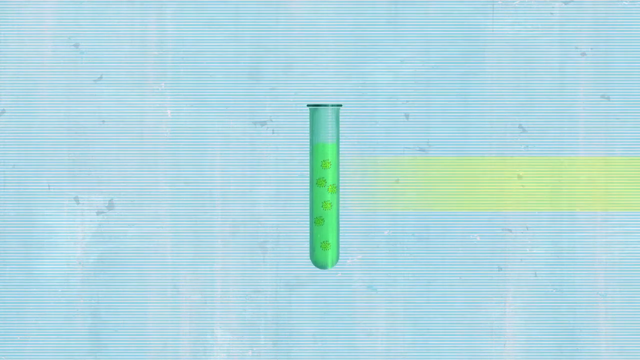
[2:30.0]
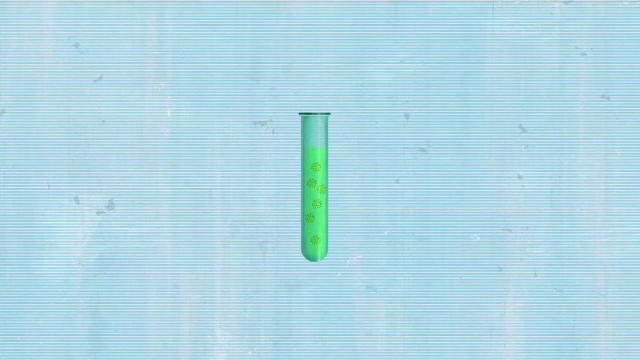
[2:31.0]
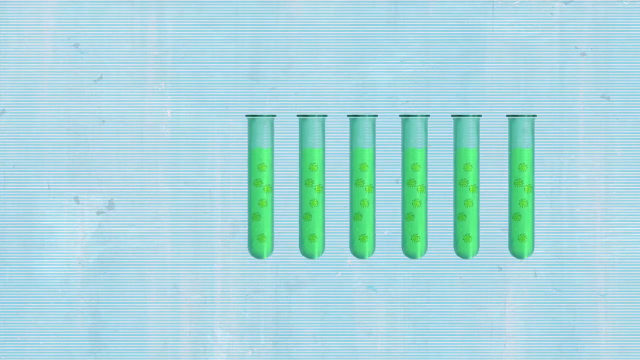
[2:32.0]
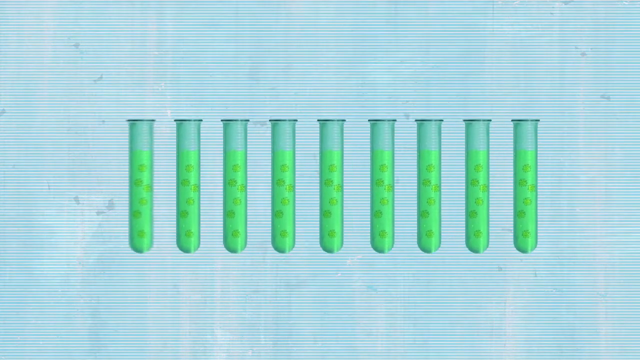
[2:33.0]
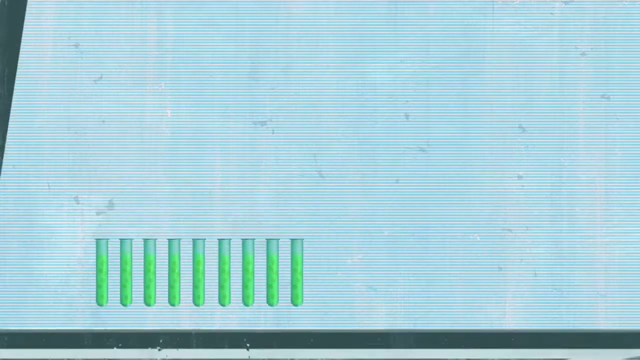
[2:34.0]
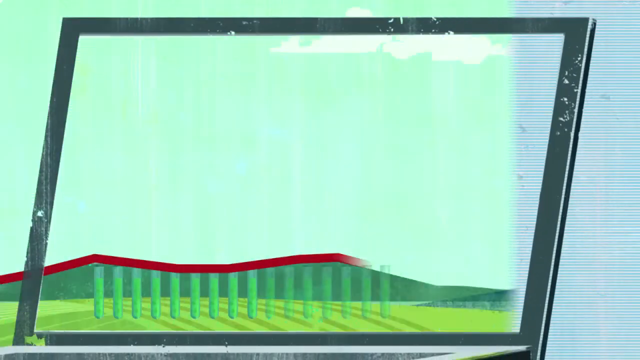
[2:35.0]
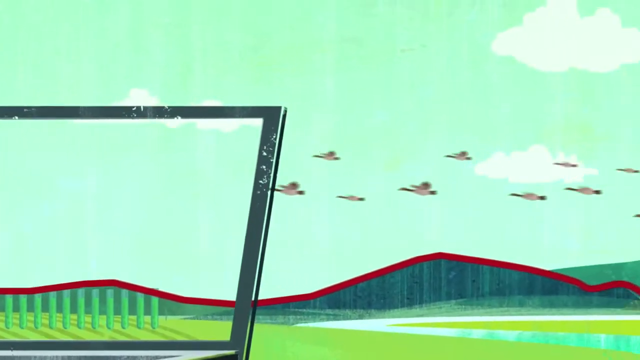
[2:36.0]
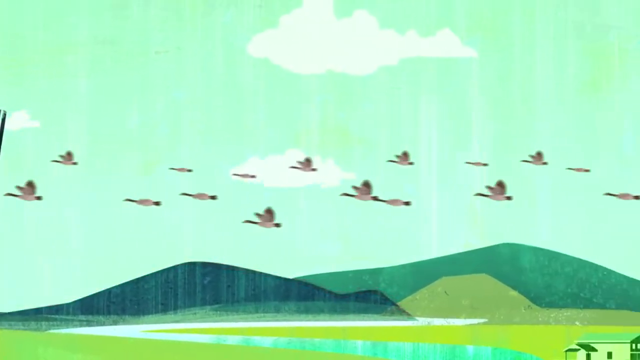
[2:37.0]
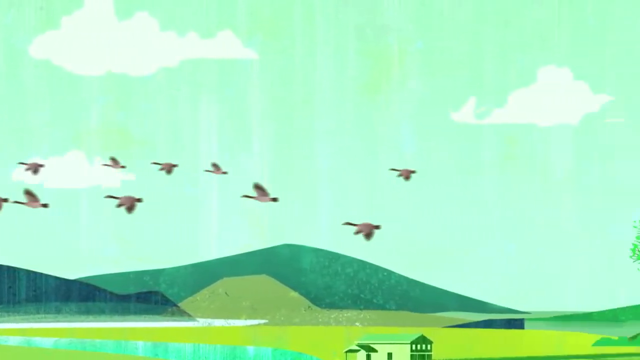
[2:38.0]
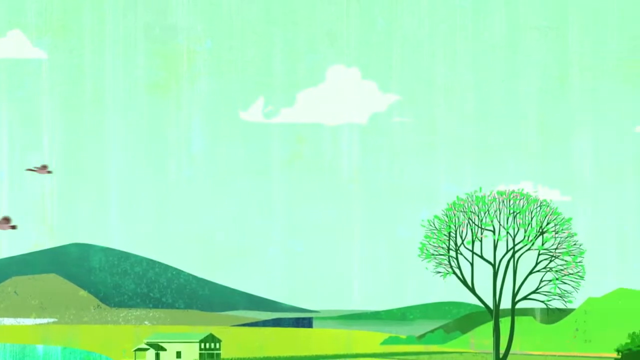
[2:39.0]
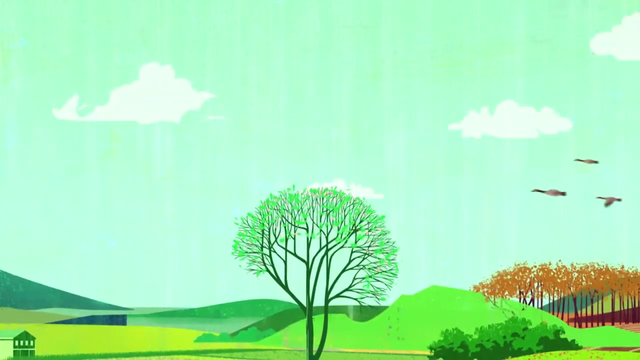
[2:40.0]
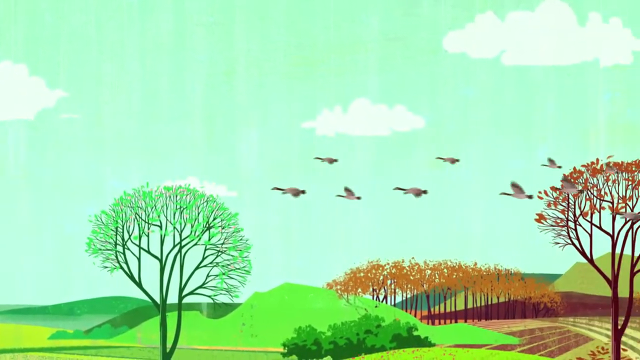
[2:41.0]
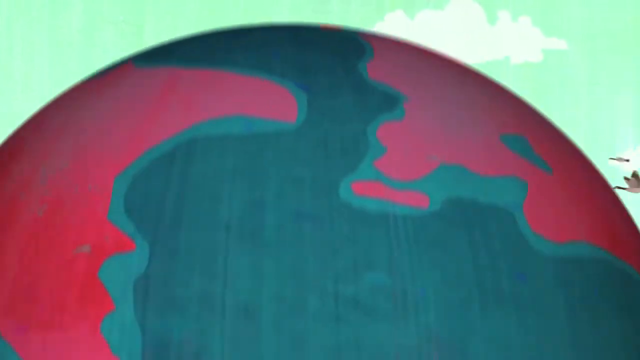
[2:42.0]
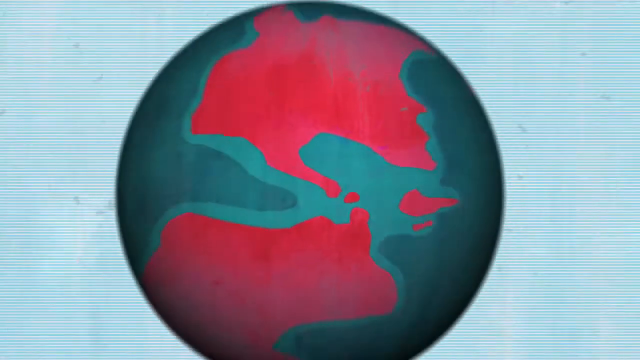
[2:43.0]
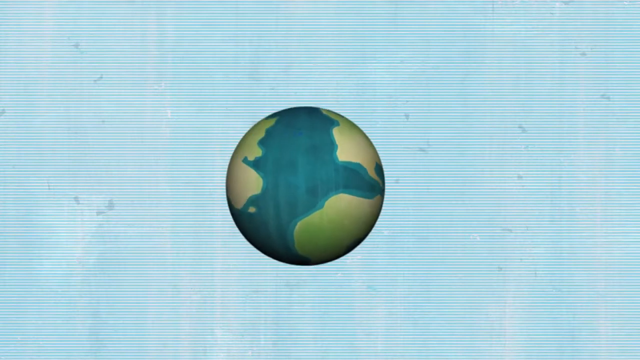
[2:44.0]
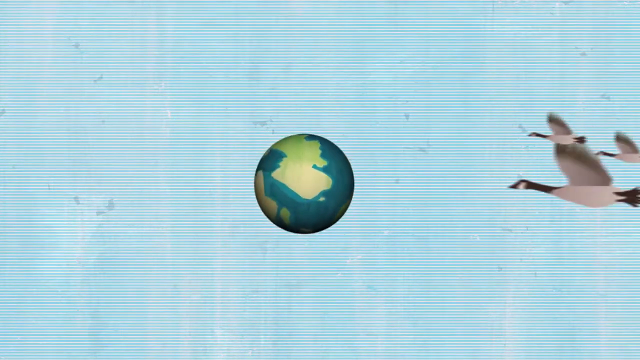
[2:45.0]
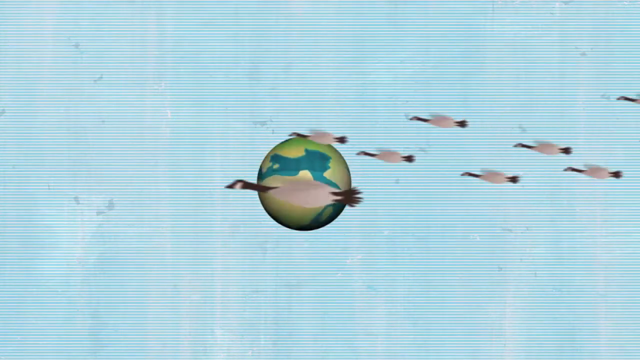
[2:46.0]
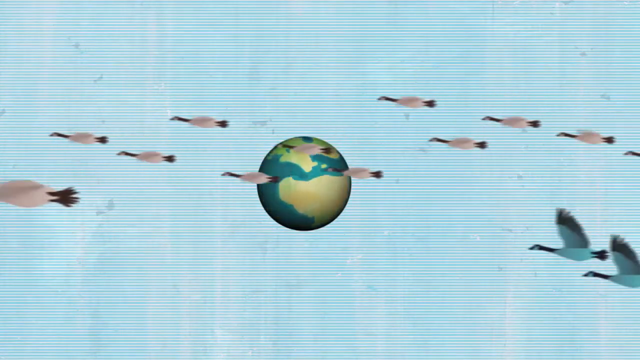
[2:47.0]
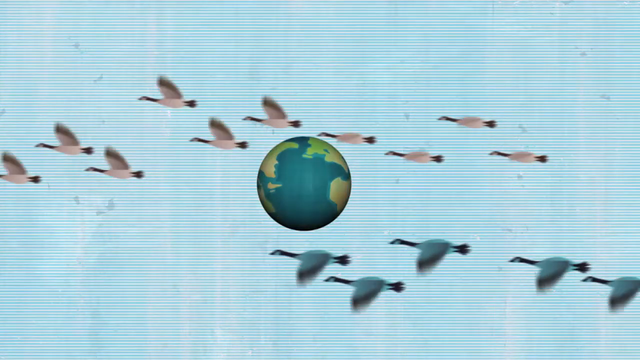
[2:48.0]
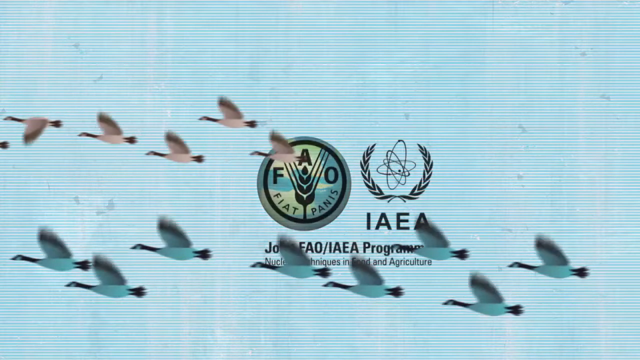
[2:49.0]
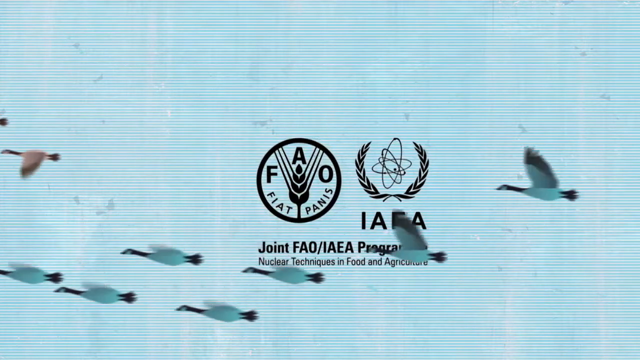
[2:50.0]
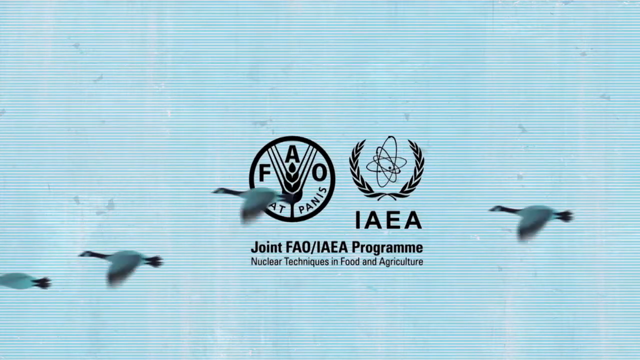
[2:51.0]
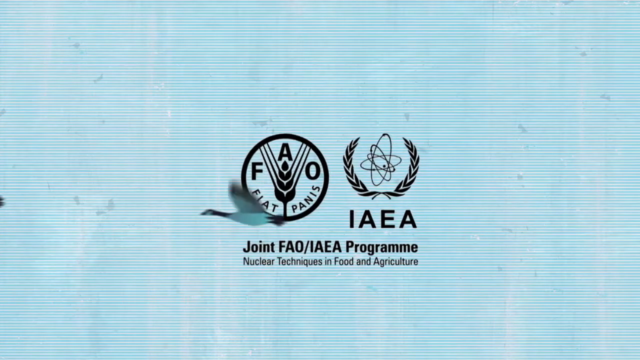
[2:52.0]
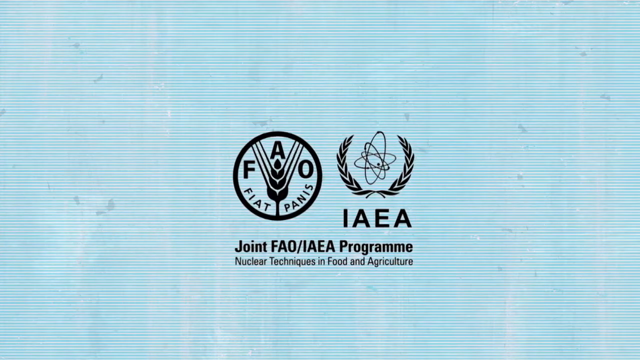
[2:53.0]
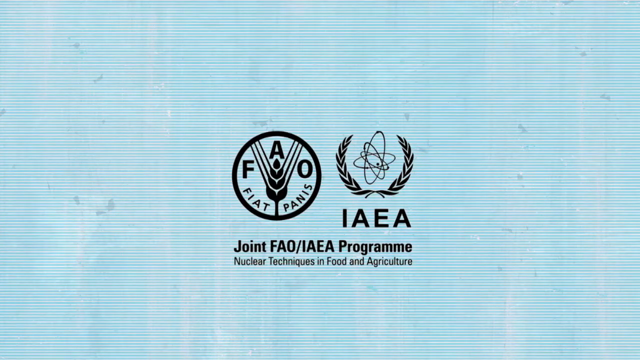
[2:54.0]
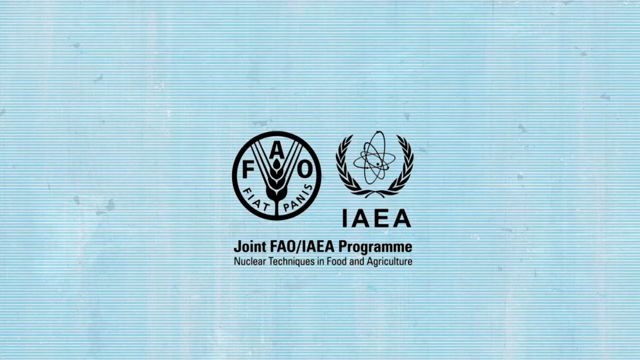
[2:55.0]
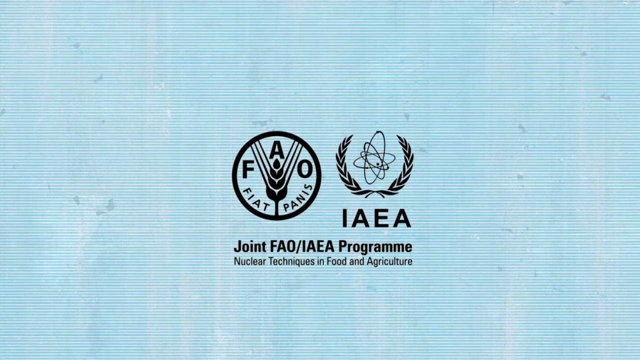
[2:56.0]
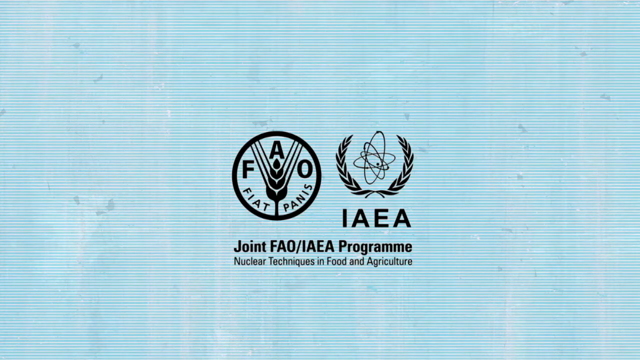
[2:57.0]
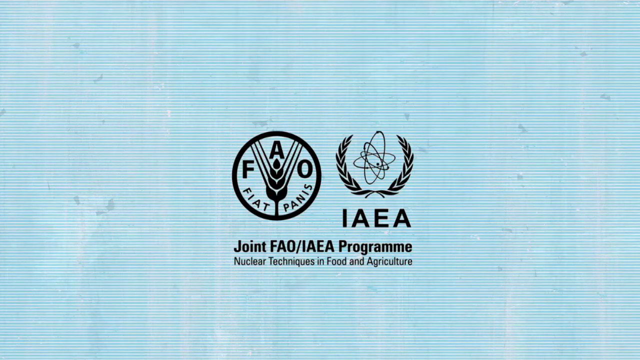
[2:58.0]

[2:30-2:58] The yellow beam hits the beaker with the green liquid inside. The beaker multiplies into nine beakers right next to each other, each with the same color liquid at the same fill level. The scene transitions to a view that almost looks like it is on an iPad. The view moves out of the iPad screen, and the beakers are outlined from the top by a red line that moves from left to right, forming the outlines of hills. The view moves from left to right, showing green trees, birds flying from right to left across the screen, and a bluish green Earth with the continents in a pinkish red color. The Earth spins and its colors change to yellowish with a darker blue. Brown geese and bluish geese fly by. Finally, the logos from the start appear, this time in black: "FAO" with "Fiat Panis" below it, and "IAEA" next to it.